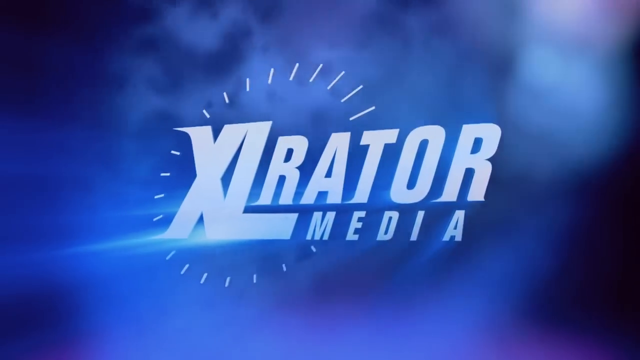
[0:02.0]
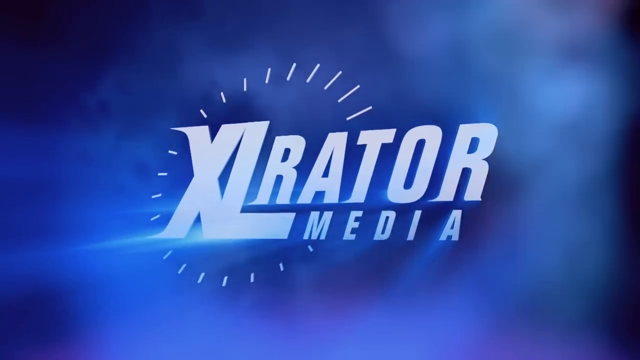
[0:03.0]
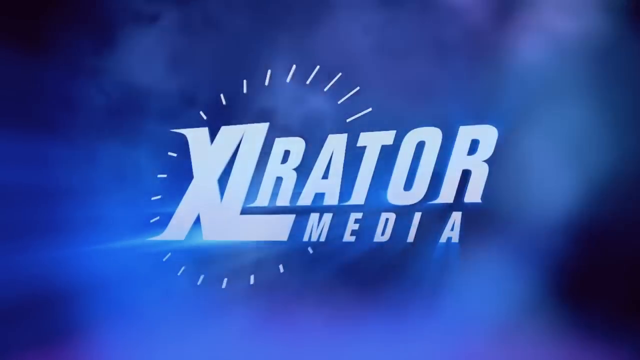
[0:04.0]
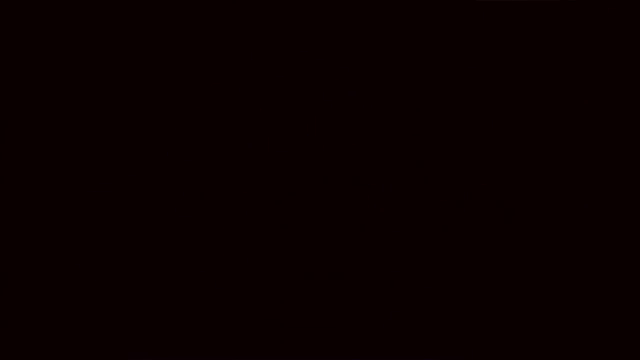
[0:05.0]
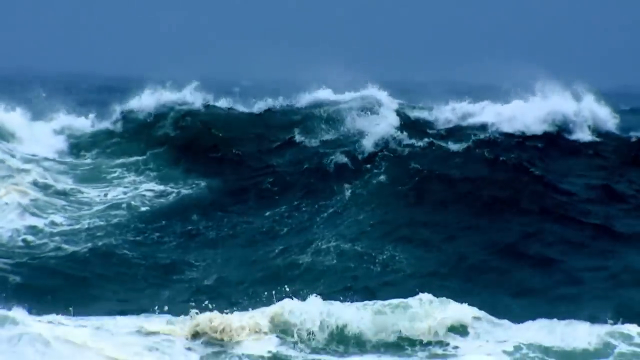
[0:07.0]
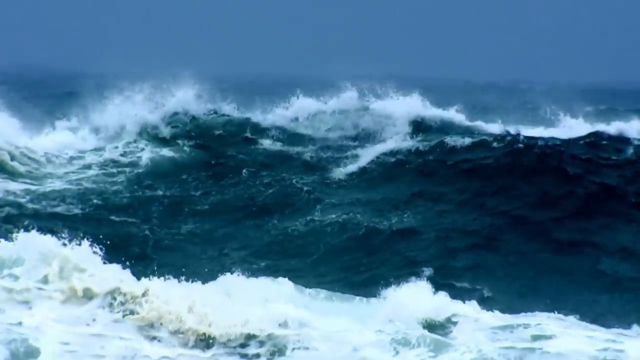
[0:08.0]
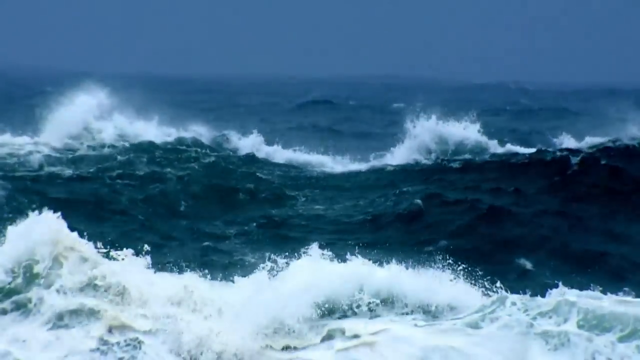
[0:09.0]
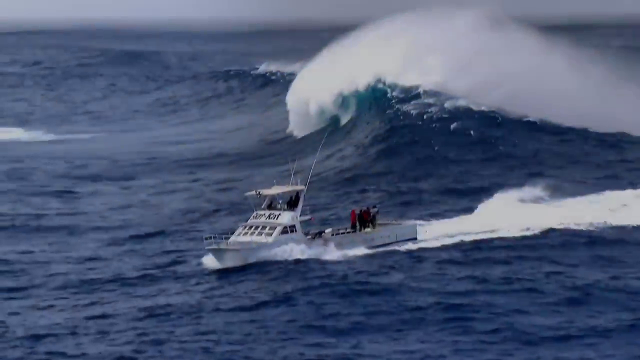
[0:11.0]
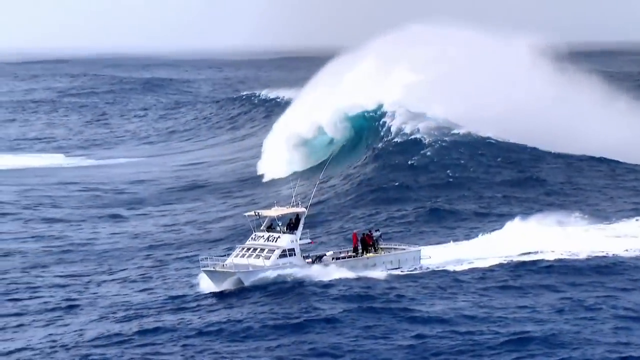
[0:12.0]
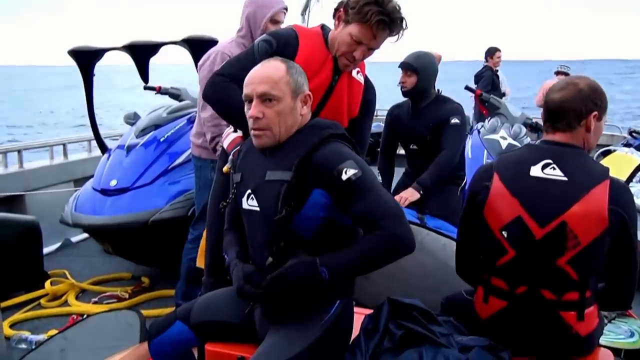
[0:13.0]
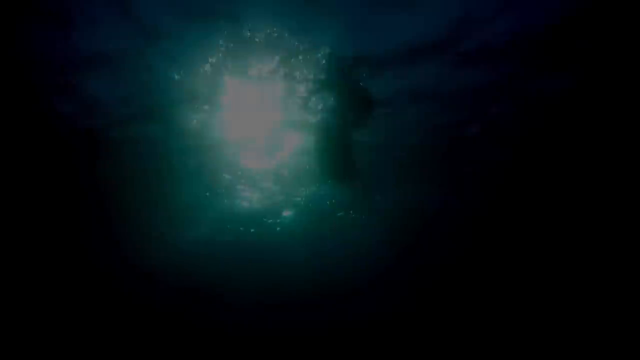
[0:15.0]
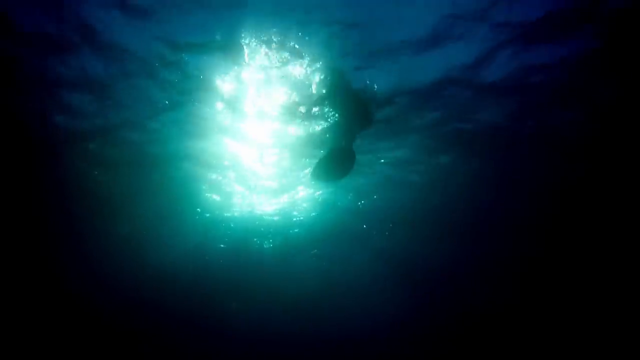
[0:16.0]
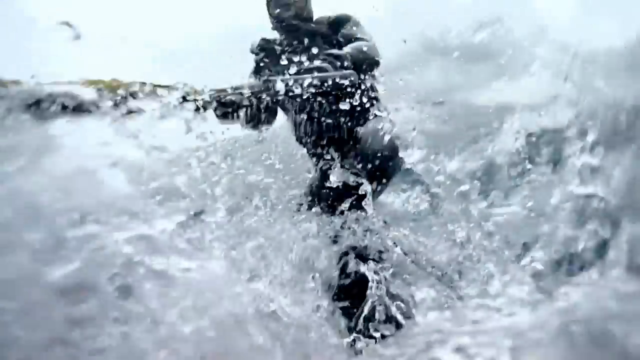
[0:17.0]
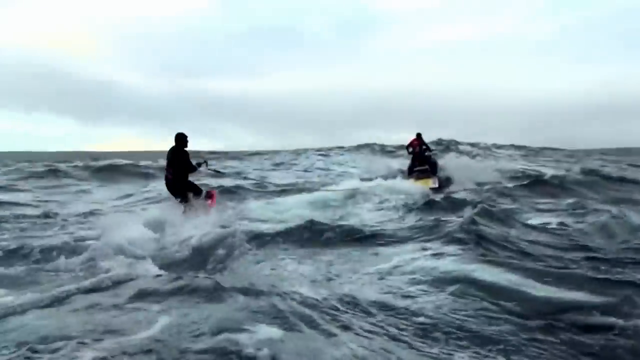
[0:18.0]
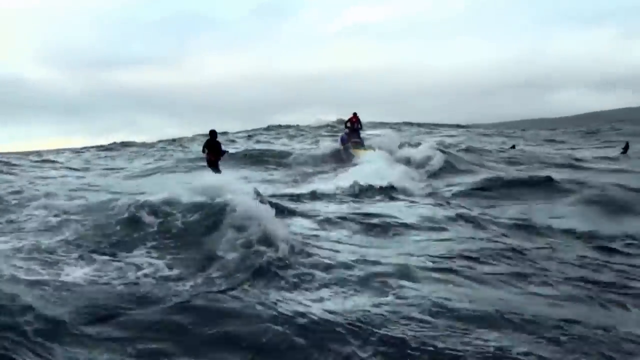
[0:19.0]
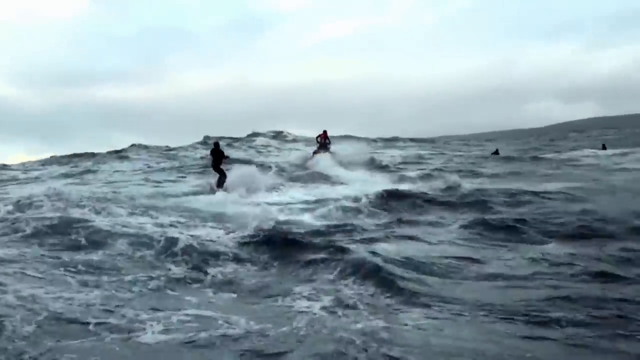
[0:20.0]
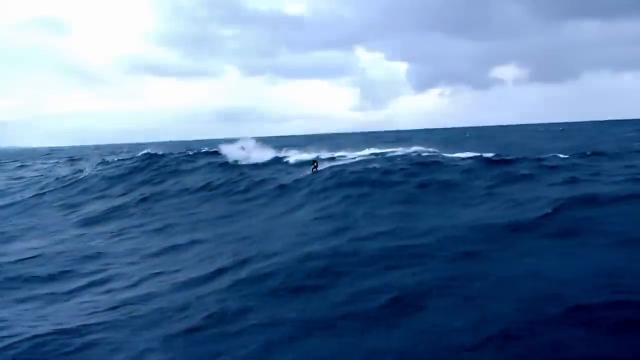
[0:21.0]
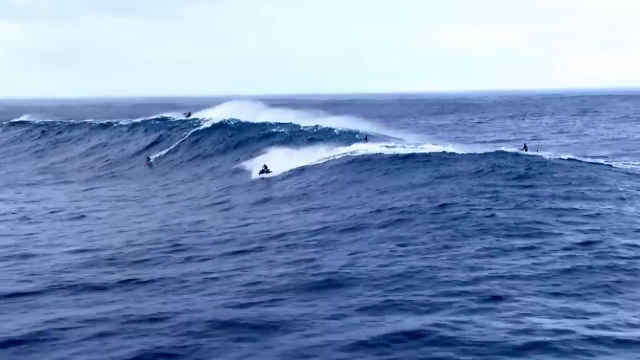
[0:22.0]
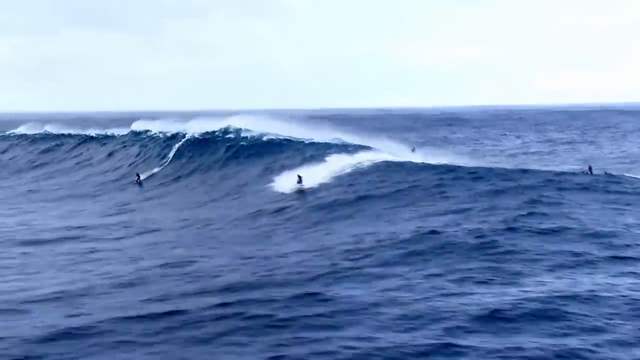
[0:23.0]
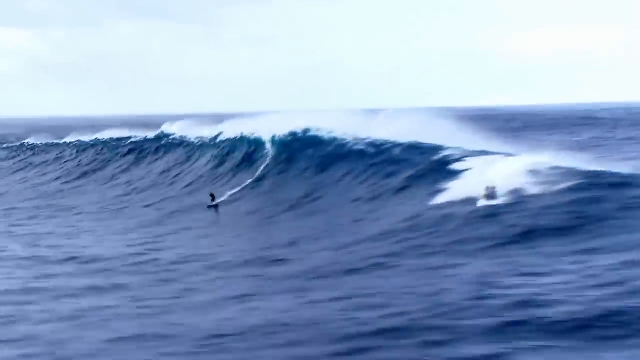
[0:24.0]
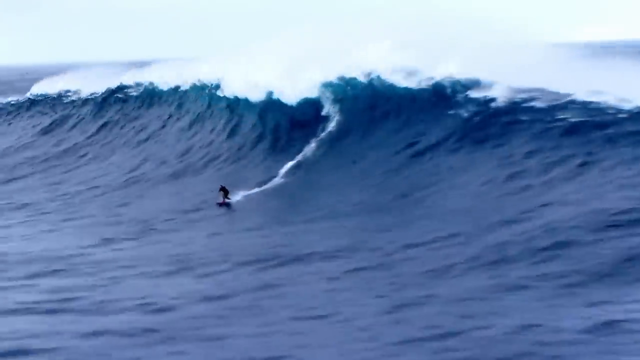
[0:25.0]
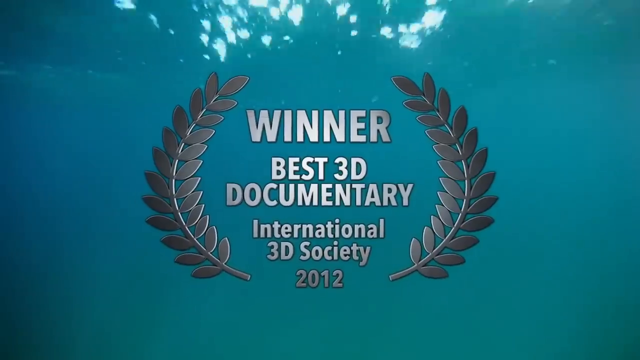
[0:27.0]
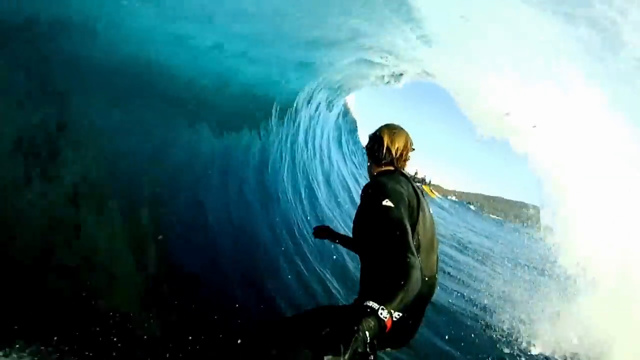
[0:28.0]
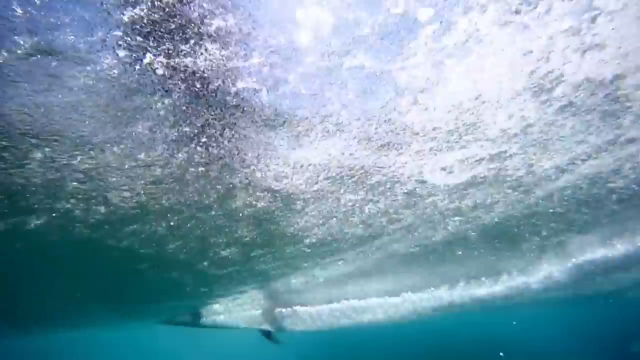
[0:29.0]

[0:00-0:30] Waves crash onto a beach with a bunch of people on it. A jet ski appears, and people are jet skiing in large weather out in the middle of the ocean. The text "Winter Quest 3 documentary" appears, and the setting is the Pacific Ocean area. The sky is clear with no clouds. "X-ray media" appears at the very beginning, with various kinds of smoke in the background, and there is a blue background with white text over it. A boat sails across the ocean.